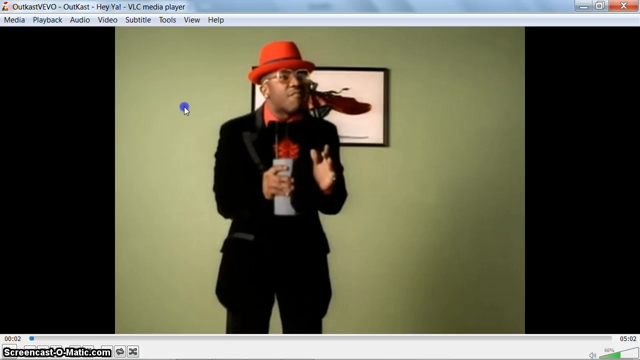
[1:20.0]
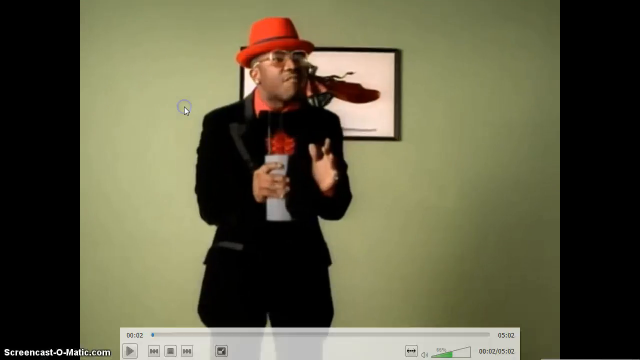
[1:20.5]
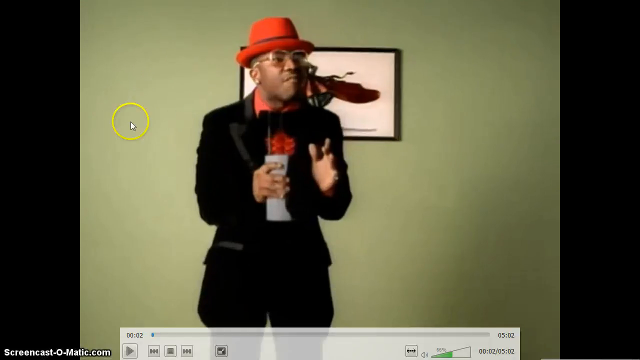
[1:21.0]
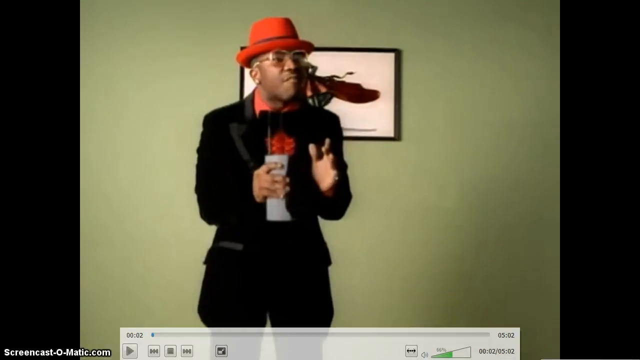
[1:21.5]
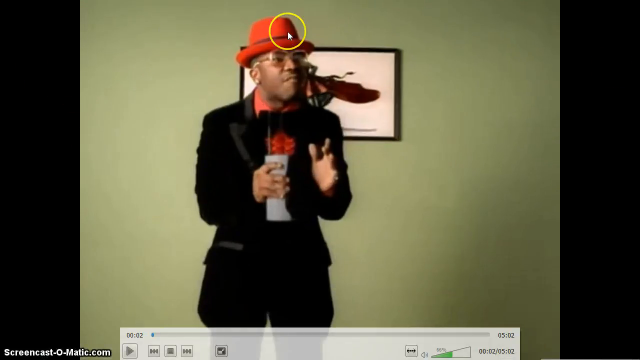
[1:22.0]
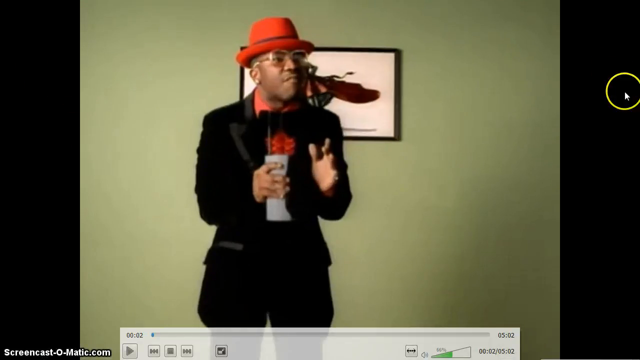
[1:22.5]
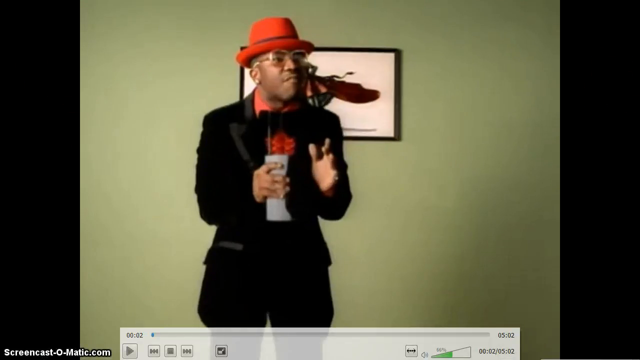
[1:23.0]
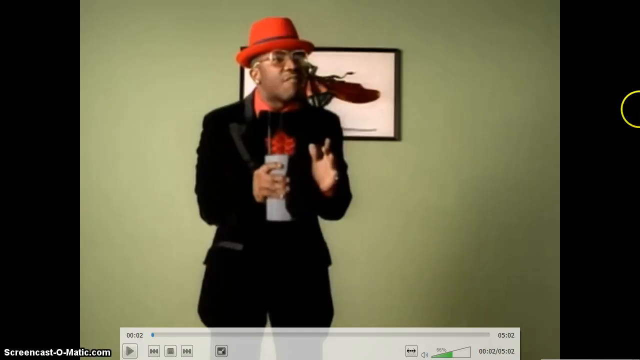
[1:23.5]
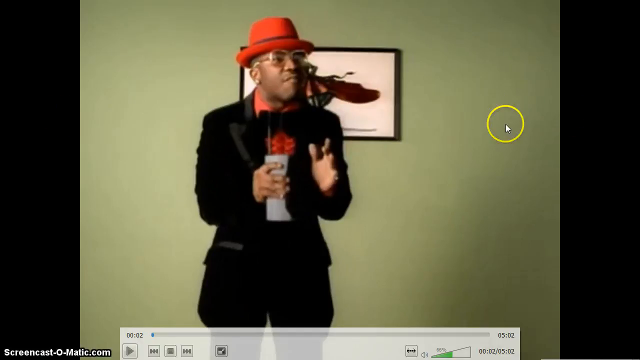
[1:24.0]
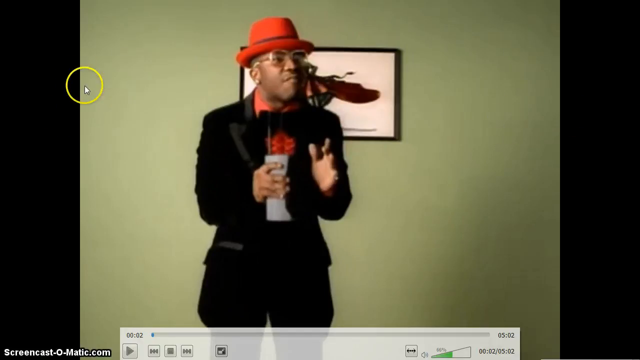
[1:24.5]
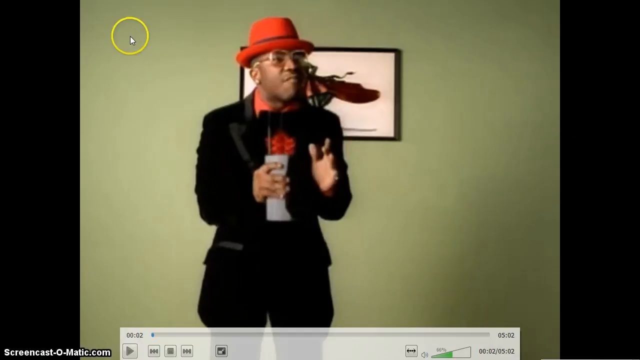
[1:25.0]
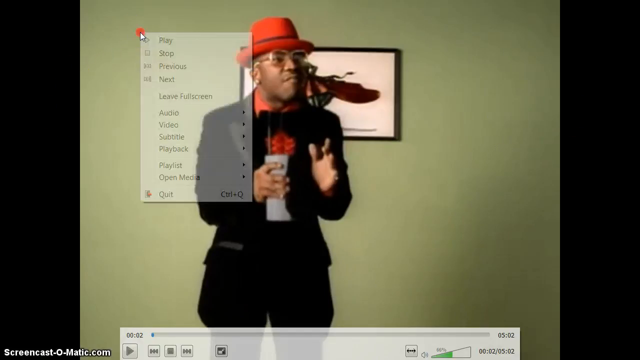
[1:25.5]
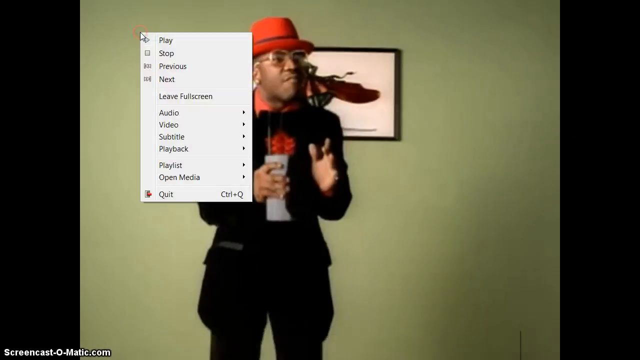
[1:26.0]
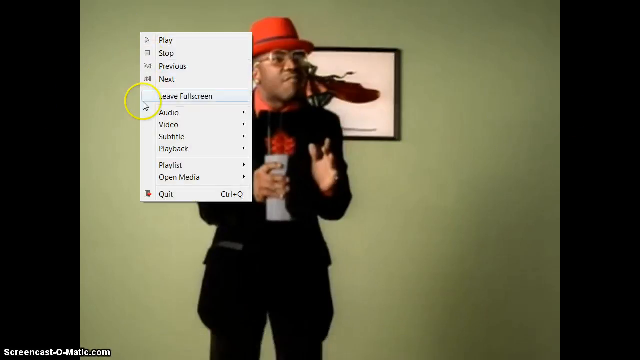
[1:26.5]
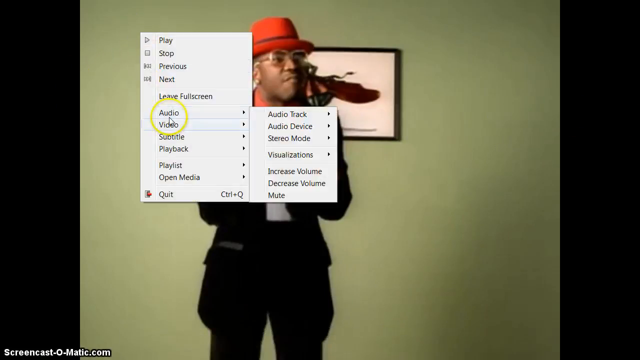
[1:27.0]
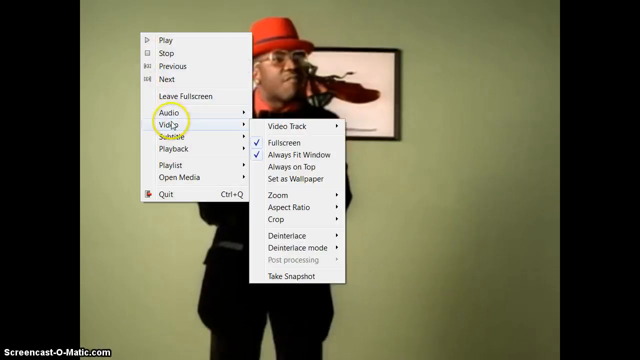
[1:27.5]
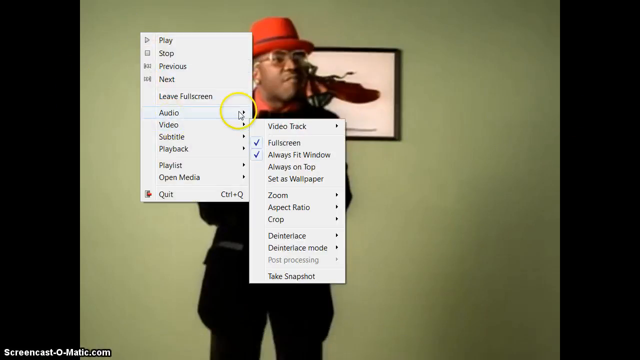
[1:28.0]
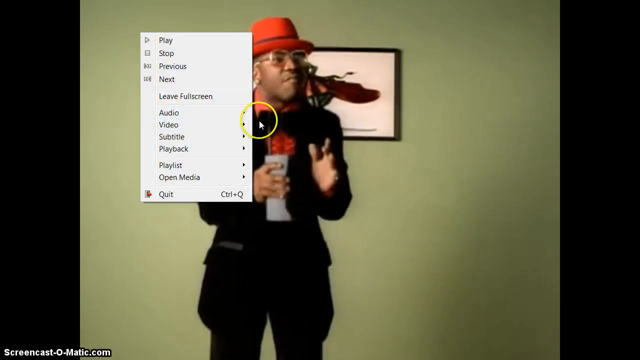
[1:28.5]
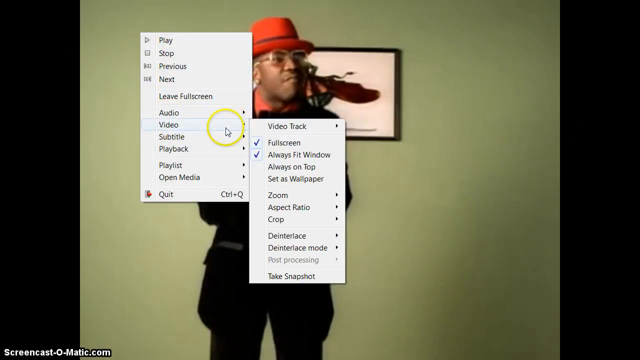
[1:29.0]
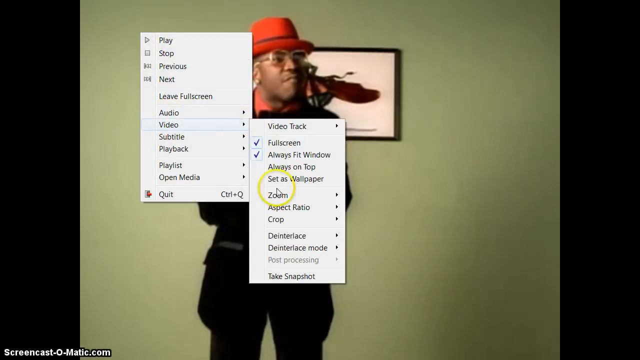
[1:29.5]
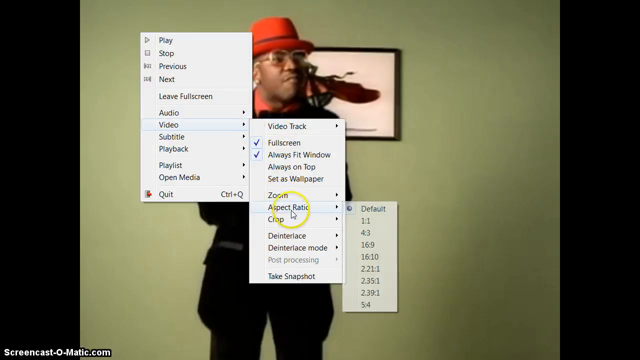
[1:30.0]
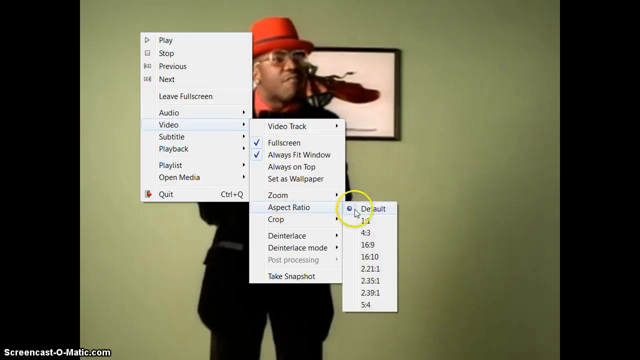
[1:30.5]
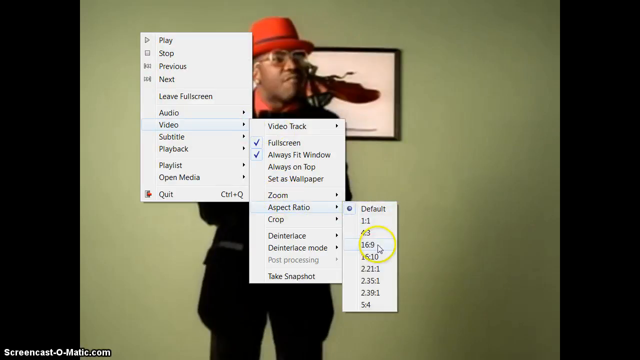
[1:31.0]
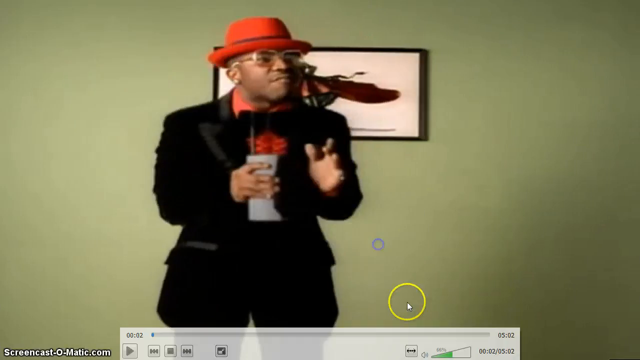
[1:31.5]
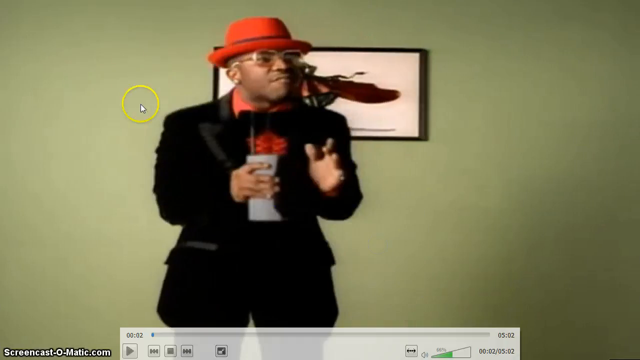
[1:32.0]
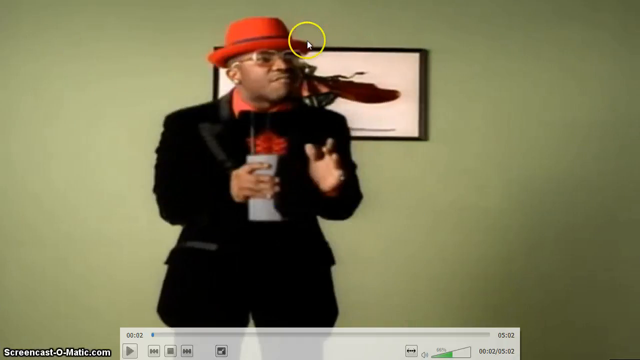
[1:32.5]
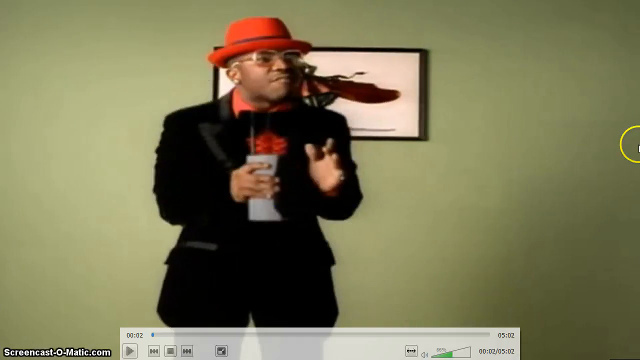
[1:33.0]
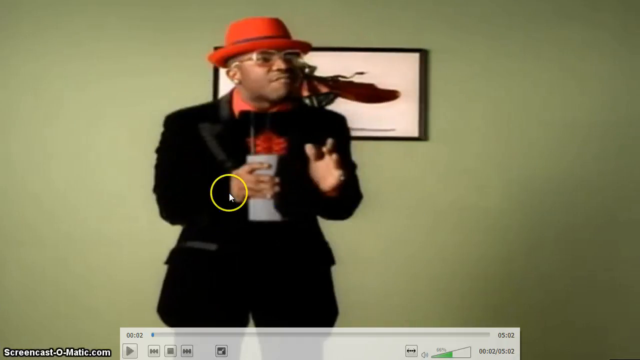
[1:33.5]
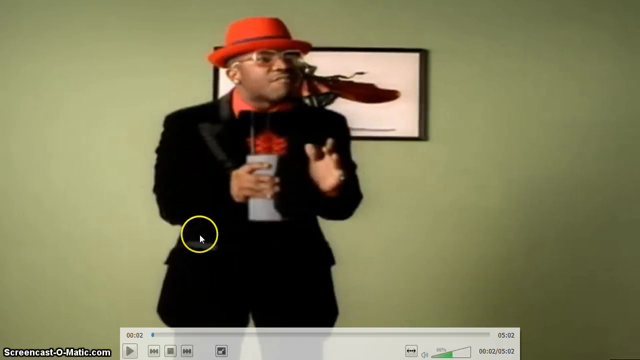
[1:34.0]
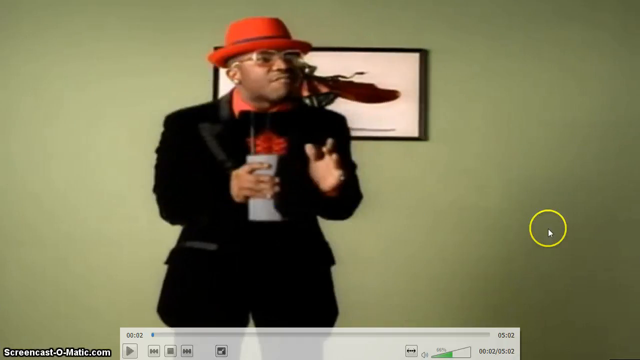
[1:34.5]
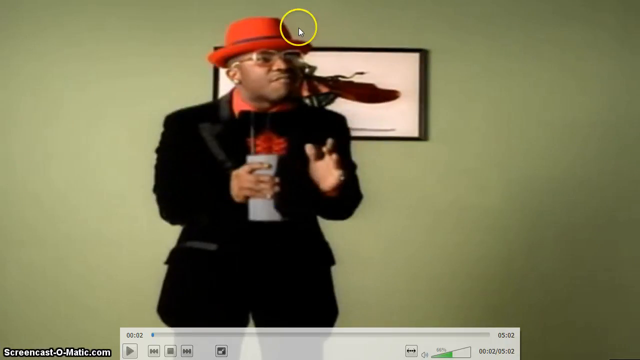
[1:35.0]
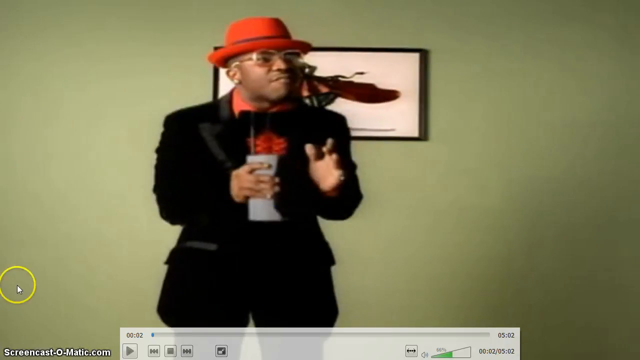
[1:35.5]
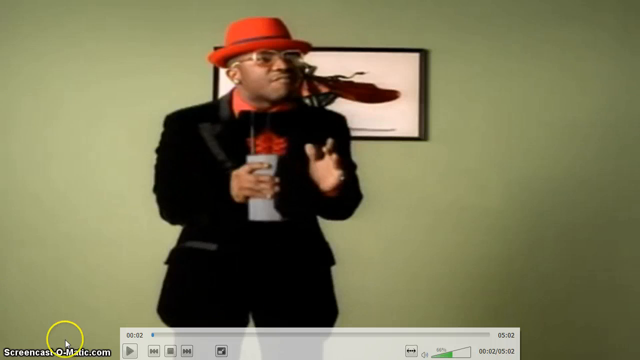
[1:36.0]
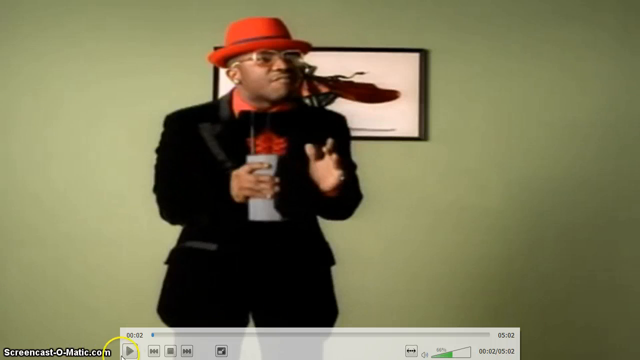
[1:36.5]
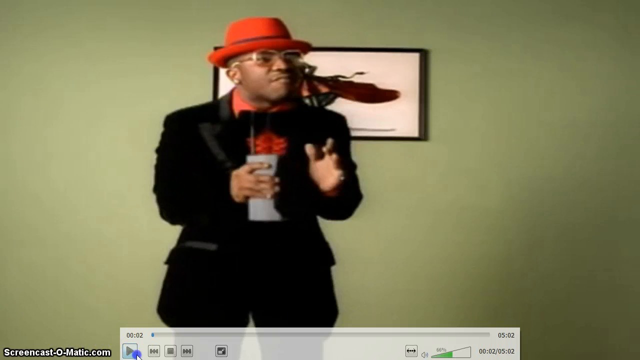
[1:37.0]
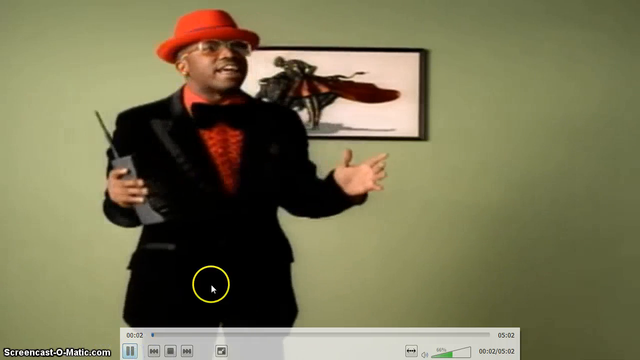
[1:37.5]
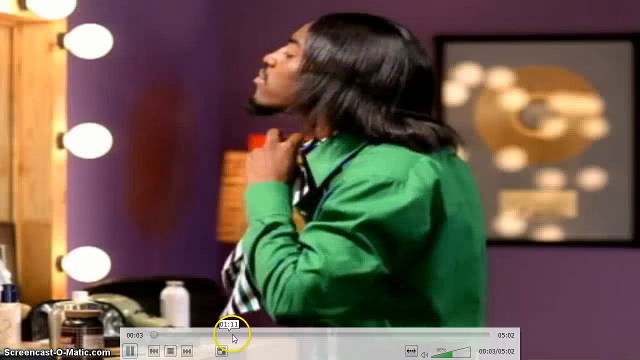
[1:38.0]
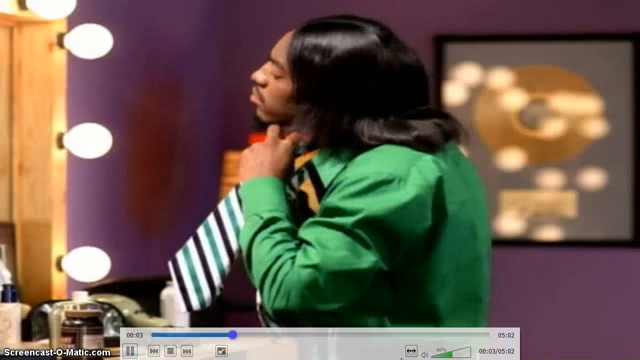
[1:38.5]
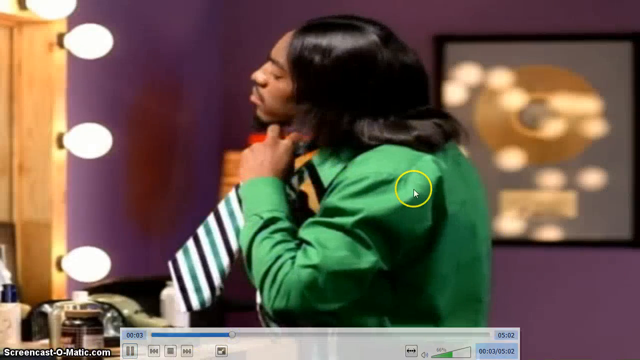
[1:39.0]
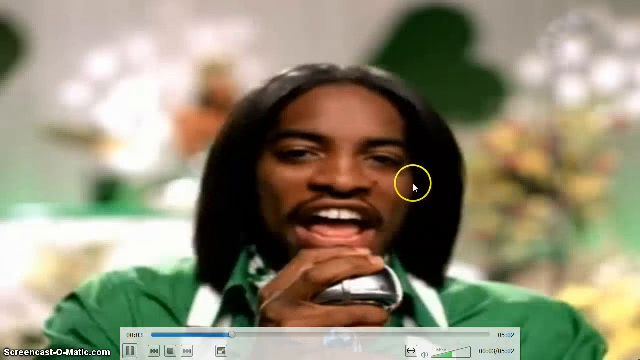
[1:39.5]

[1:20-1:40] A scene from the OutKast Hey Ya! music video plays inside the VLC media player on a computer desktop. The mouse arrow has a large yellow highlighted circle around it. The mouse kind of rotates back and forth from left to right, then right-clicks on the screen, clicks the video tab, then aspect ratio, and changes it to 16:9. The video now fills the entire screen and plays portions of the Hey Ya! music video, including a part where the characters are in a dressing room. In the dressing room is the lead singer, Andre 3000, in a purple outfit that quickly changes to the main green outfit.